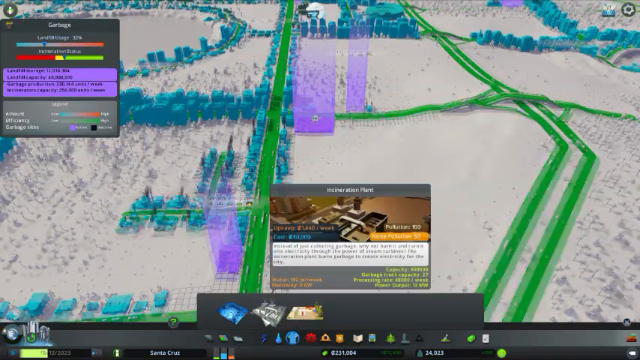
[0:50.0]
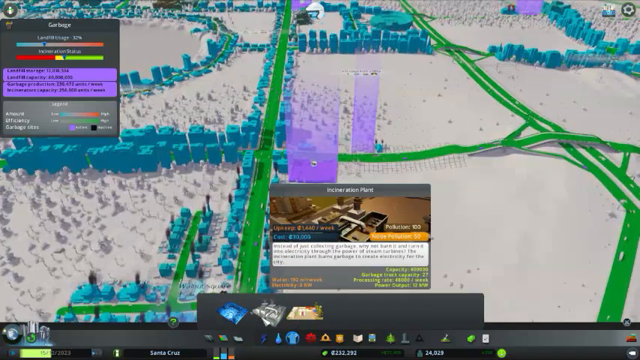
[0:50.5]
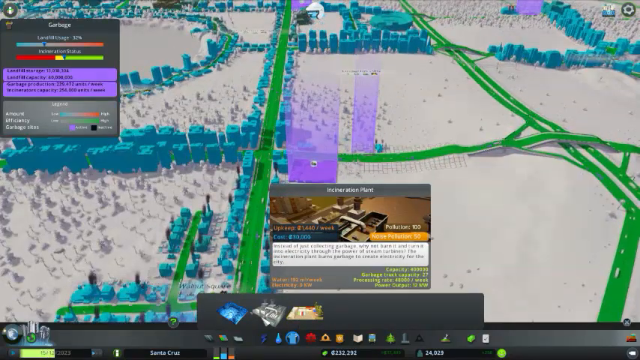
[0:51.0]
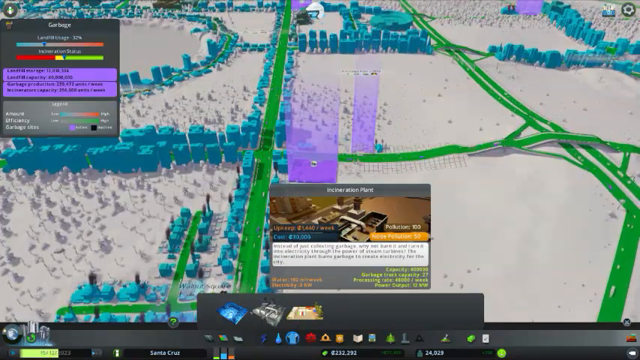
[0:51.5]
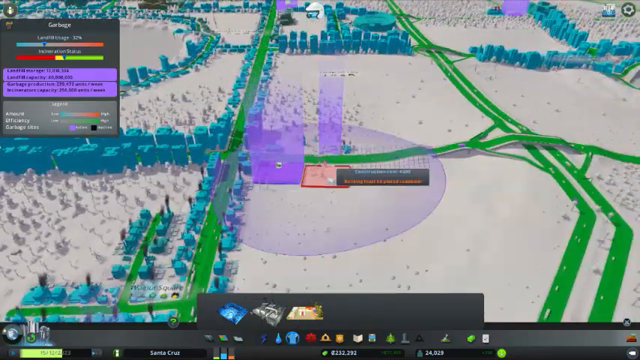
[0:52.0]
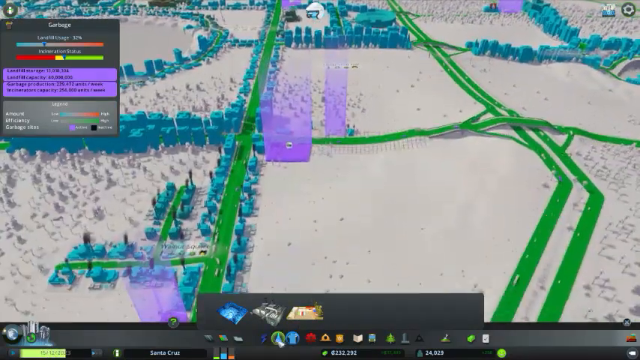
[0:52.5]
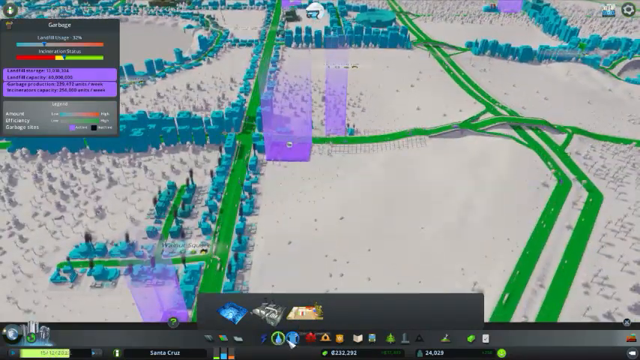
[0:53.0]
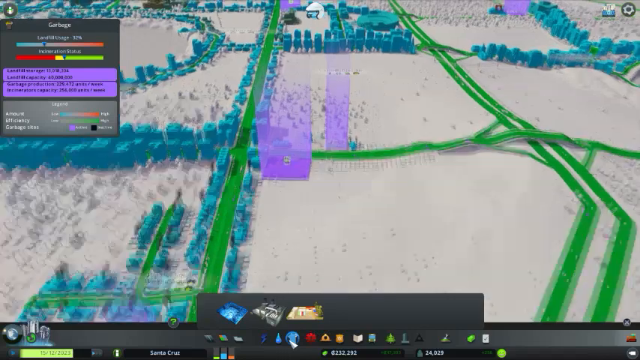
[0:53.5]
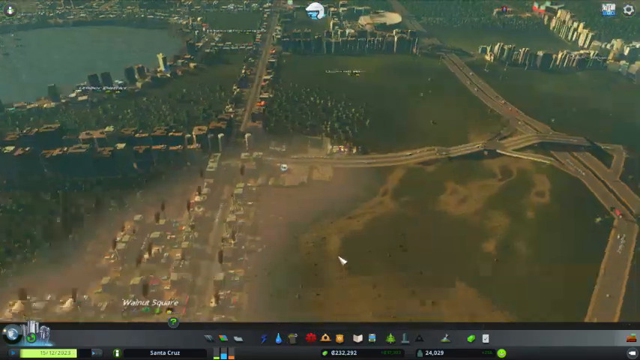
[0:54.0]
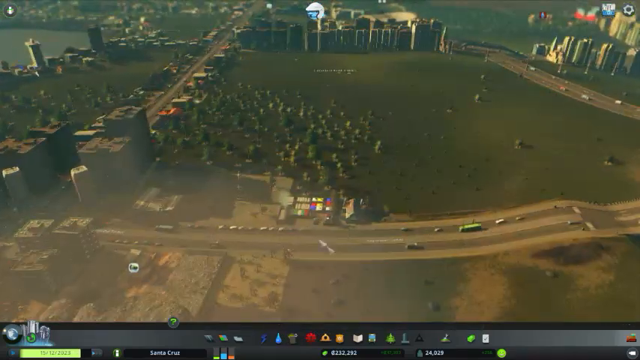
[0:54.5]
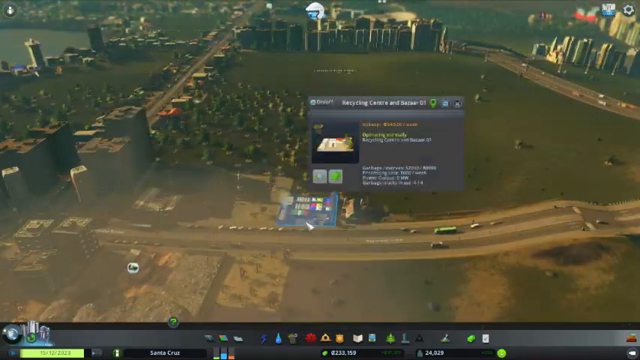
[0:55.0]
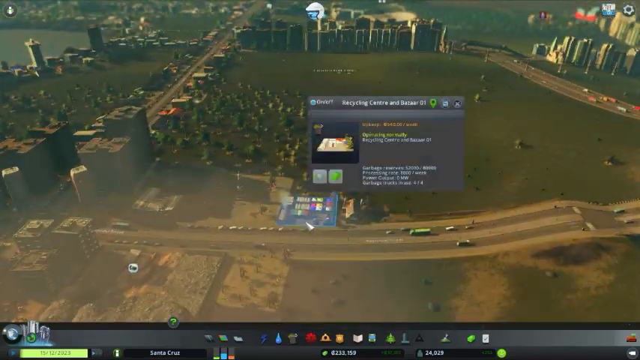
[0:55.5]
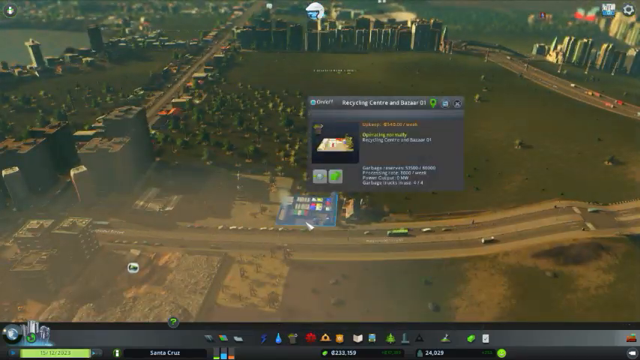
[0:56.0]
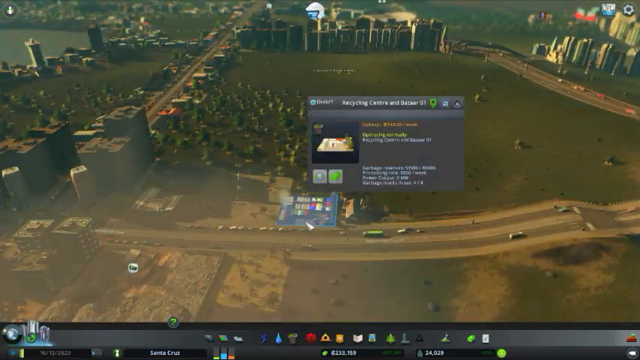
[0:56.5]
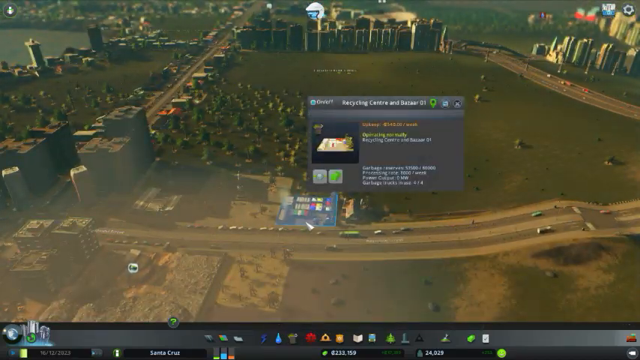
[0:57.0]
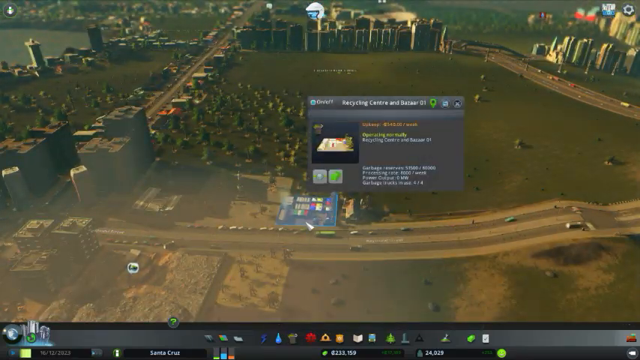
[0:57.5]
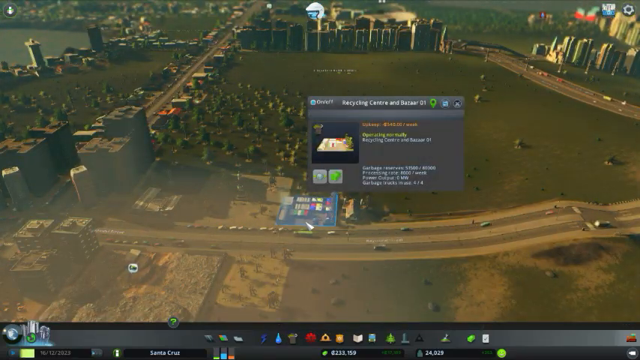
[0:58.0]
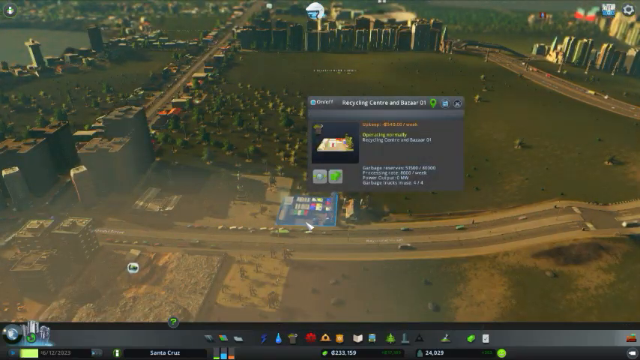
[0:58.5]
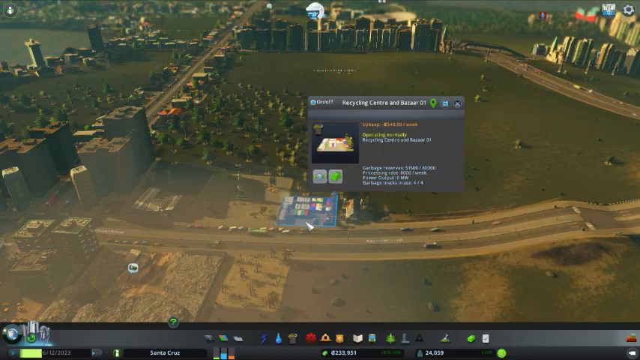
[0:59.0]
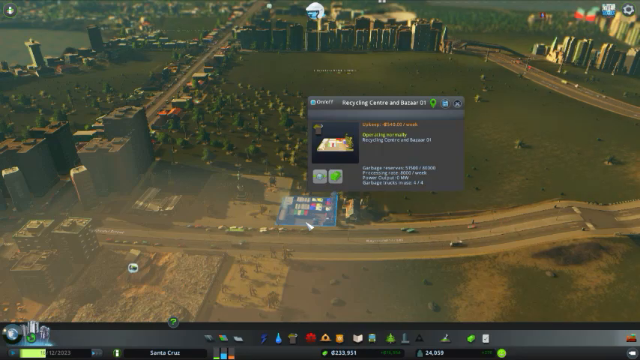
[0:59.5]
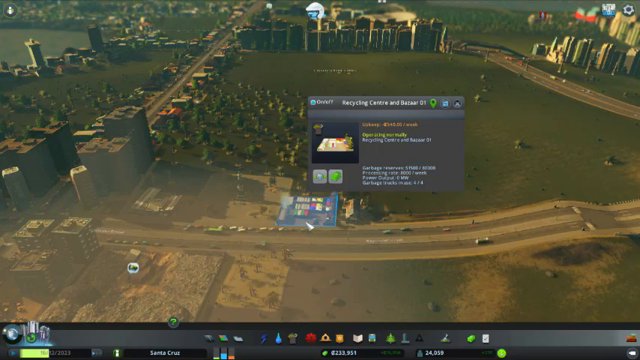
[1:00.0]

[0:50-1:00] The overhead view of the same landscape of trees and buildings is shown with the trees and grass in white, the buildings and homes in teal, and the roads in a very lime green. Three large transparent purple shapes, like large towers, appear on the landscape. At the top left is a gray square box with horizontal bars; it is very blurry, but it apparently says "landfill" at 12%. At the bottom middle are many small icons, and above them is a box that says "insuration plant" with an image of the plant below it. White vehicles move both horizontally and vertically along the lime green roads. The person clicks a menu item, reverting the view to the realistic look of the game: the land is green again, the roads are pavement, and the buildings are dark and brown. The person zooms in and clicks a building called the Recycling Center, which is highlighted in light blue, and a pop-up appears.